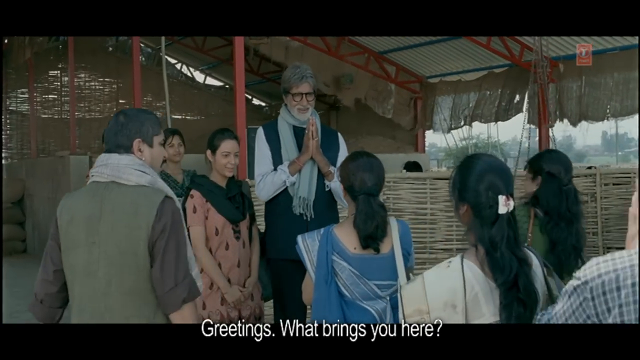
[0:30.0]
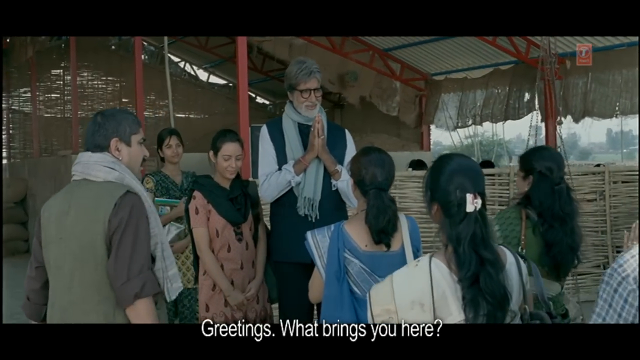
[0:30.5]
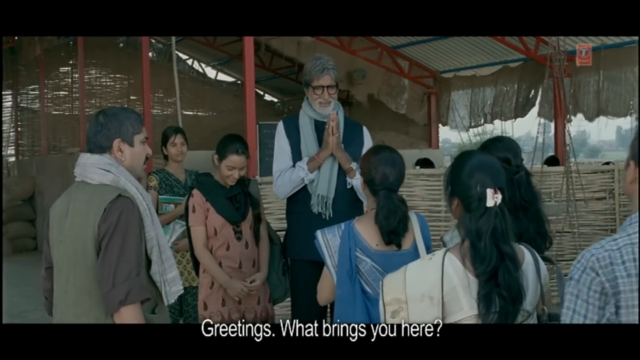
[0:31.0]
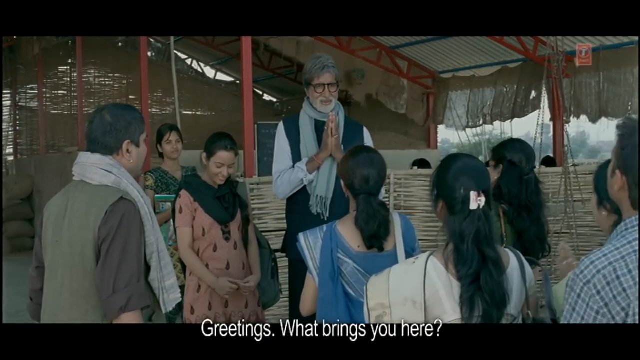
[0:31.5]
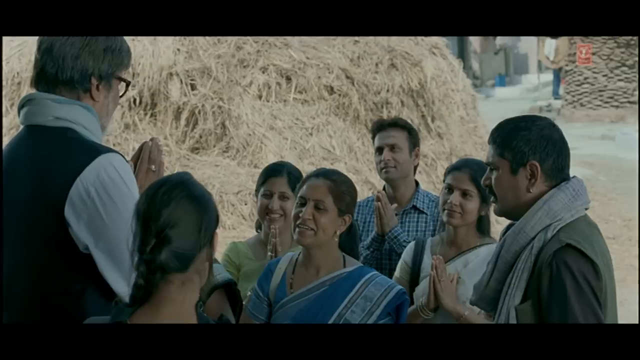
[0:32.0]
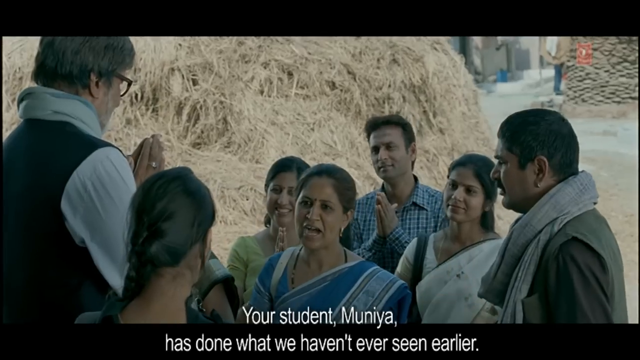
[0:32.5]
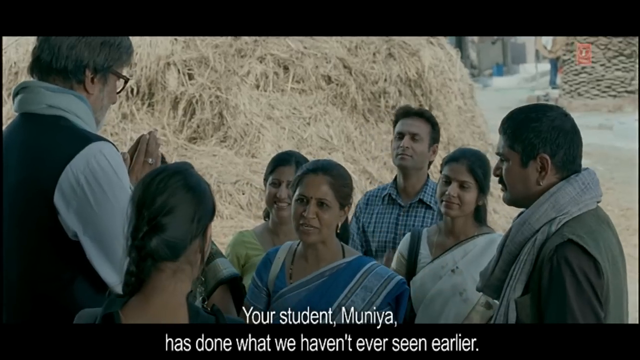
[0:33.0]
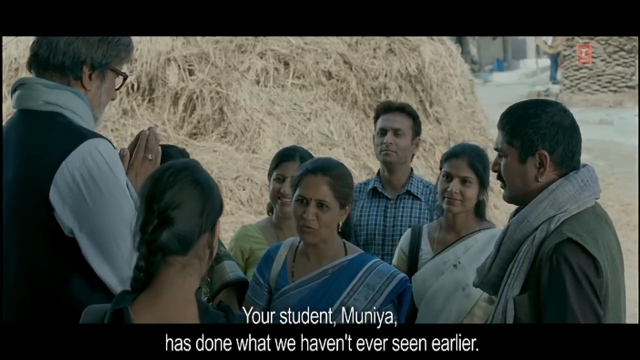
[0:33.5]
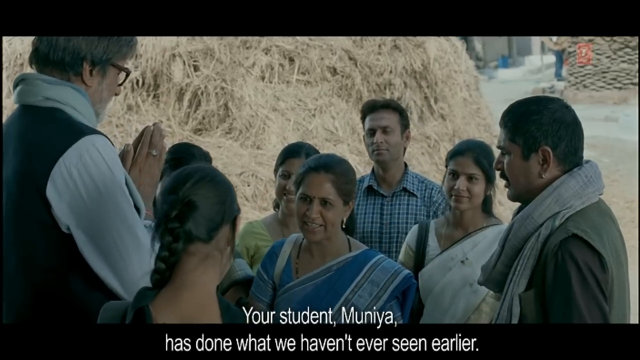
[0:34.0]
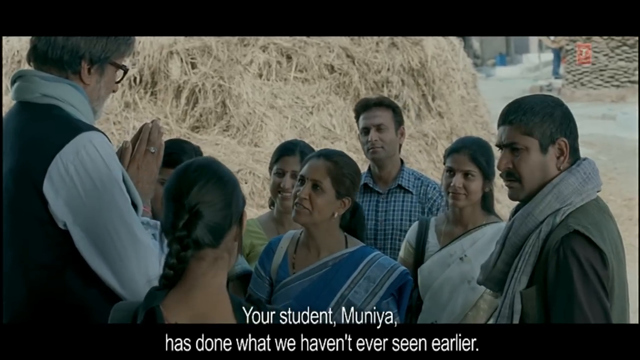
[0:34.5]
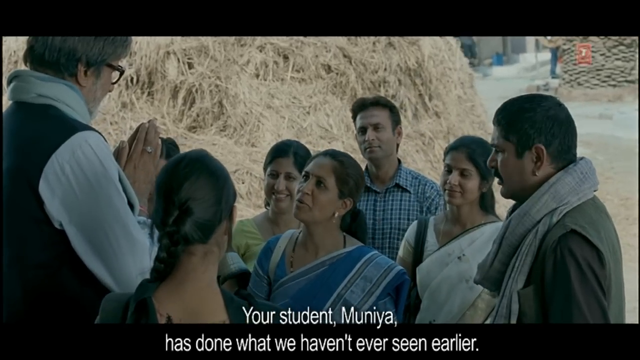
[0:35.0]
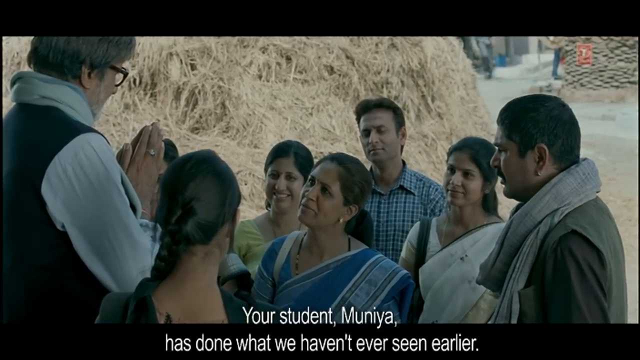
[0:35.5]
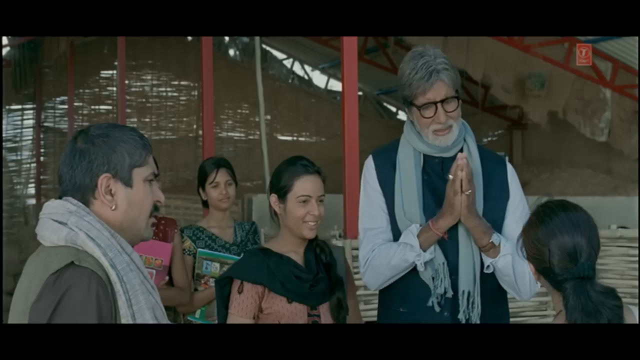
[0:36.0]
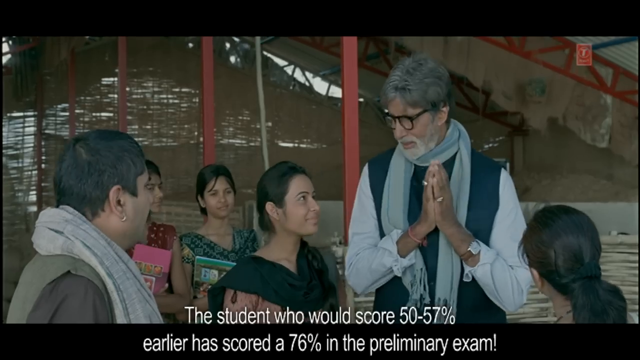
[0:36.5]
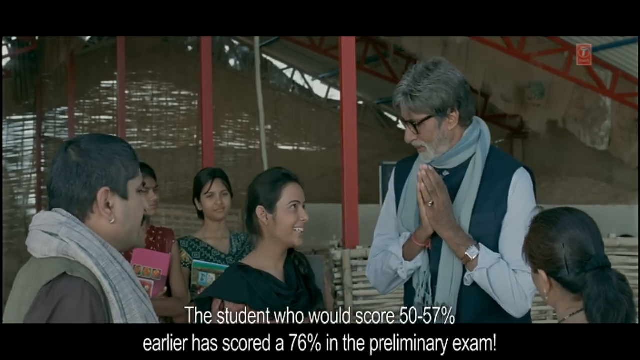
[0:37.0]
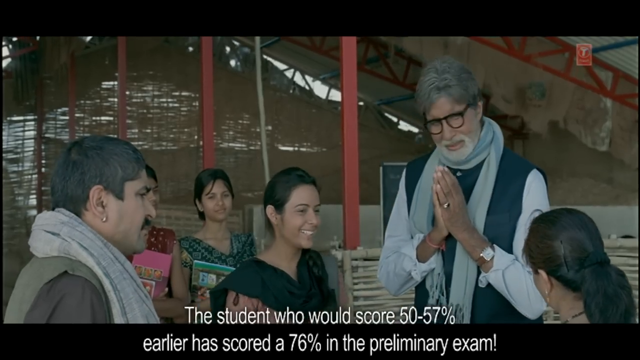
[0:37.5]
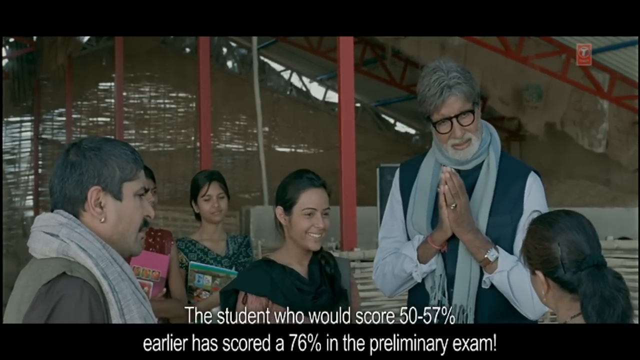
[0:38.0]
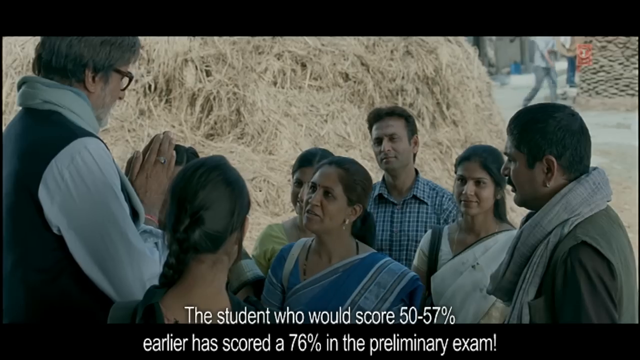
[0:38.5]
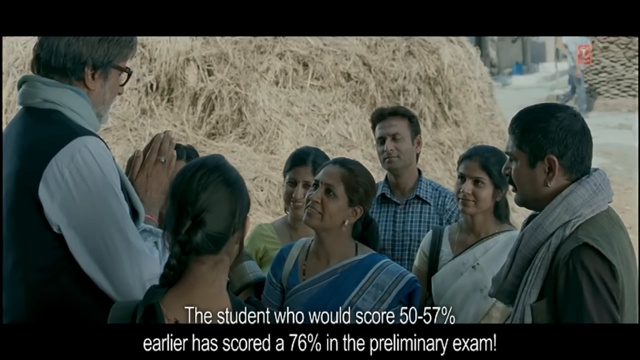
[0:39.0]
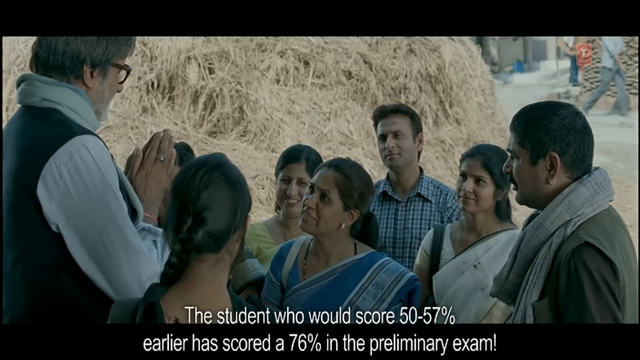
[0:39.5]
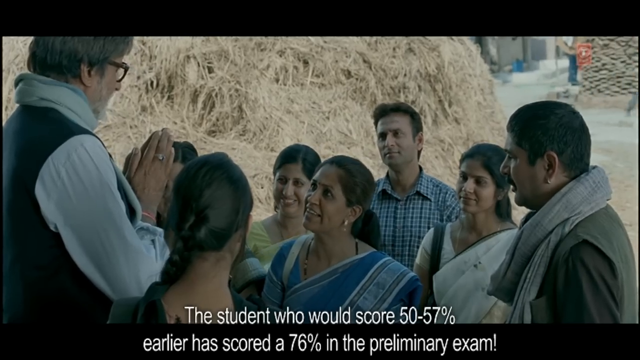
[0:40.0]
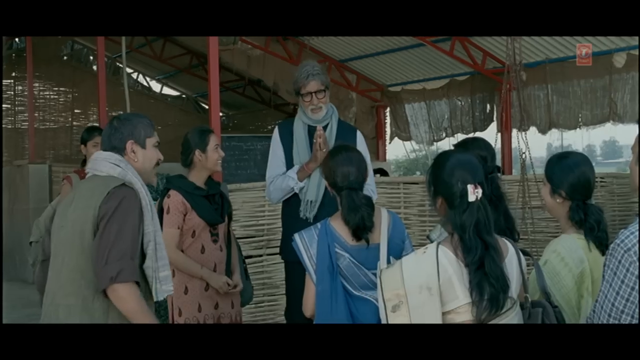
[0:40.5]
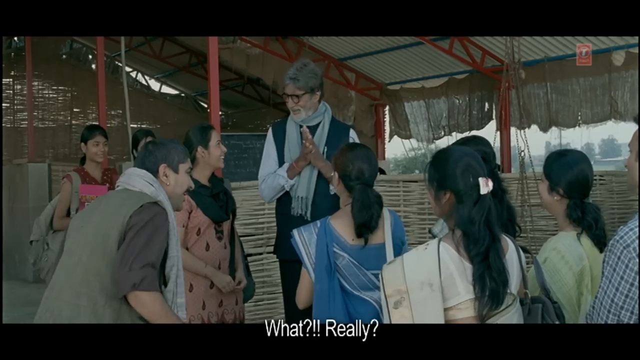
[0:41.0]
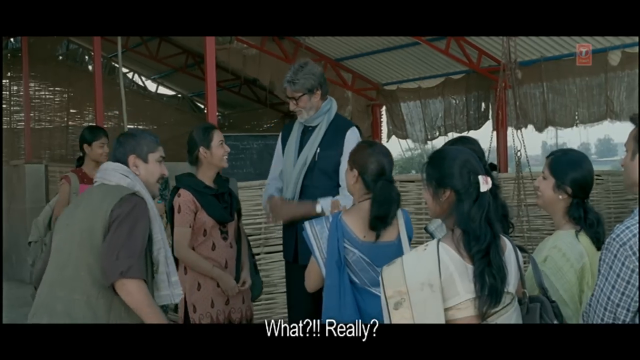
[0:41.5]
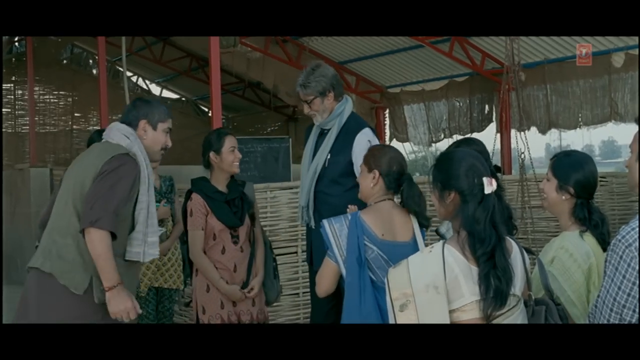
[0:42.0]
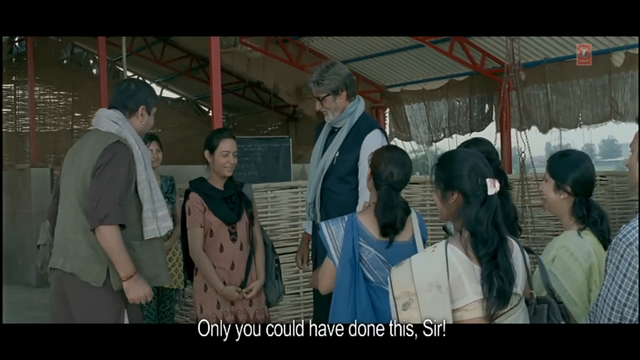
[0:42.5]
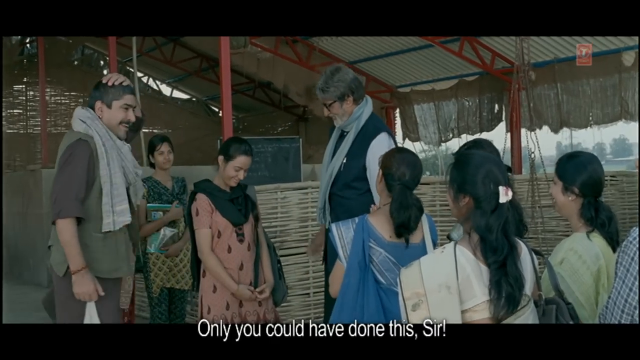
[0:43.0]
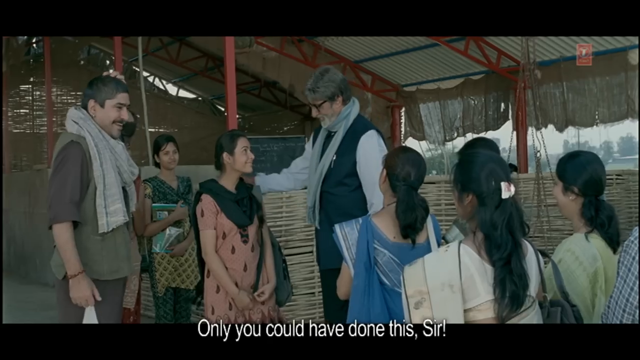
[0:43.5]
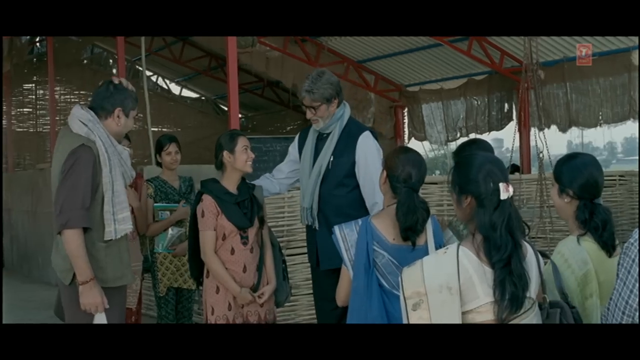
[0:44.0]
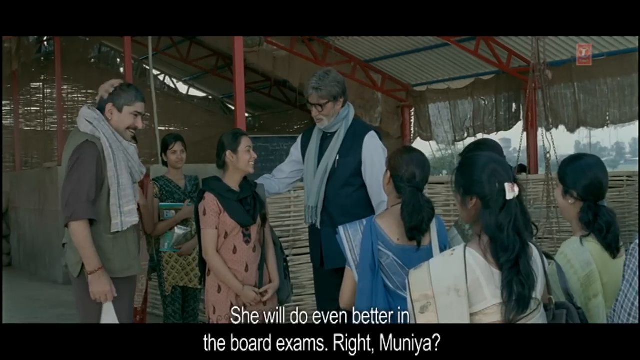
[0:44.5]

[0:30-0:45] The view is zoomed in on the people. The very tall man stands over all of them with his hands still clasped in prayer hands. He wears a ring, a scarf and glasses, and looks well put together. He looks at the people almost as if asking what is going on. A woman in blue at the front, maybe of a mother's age, is the main speaker for the group; she talks to him with a smile and kind of looks at the girl beside him, who is maybe one of his students. The teacher keeps looking down at the girl, then puts his arm around her back and pats it. They all kind of look at her as she stands there kind of sheepishly. What the woman says seems positive, and the teacher looks happy.